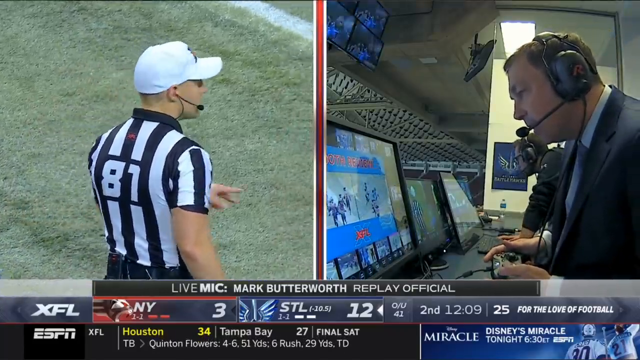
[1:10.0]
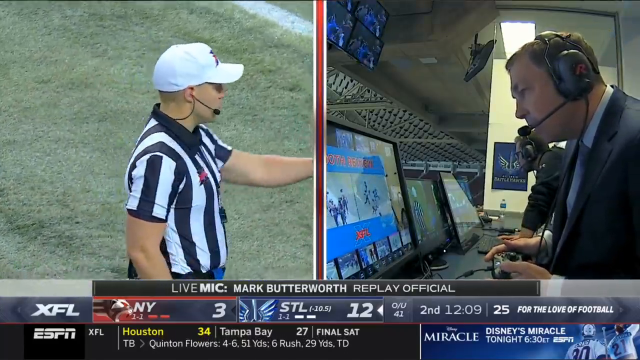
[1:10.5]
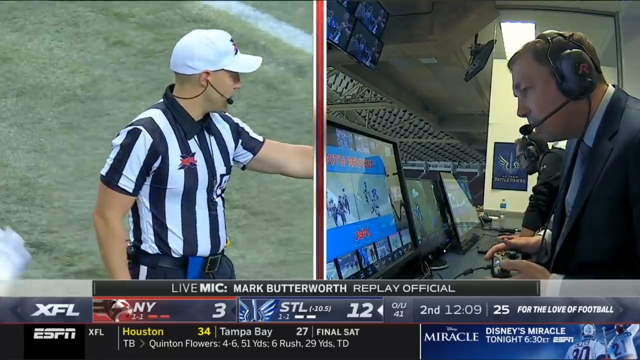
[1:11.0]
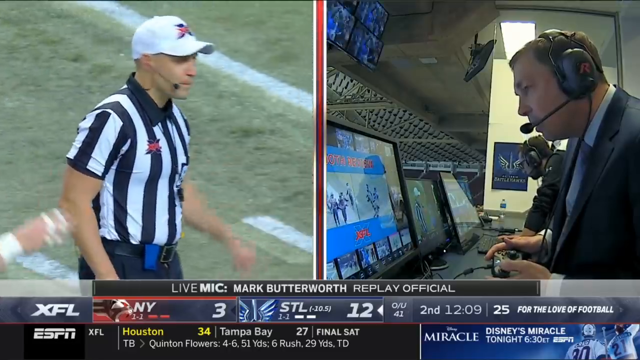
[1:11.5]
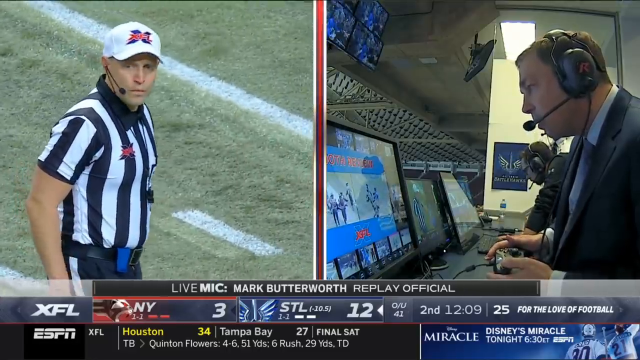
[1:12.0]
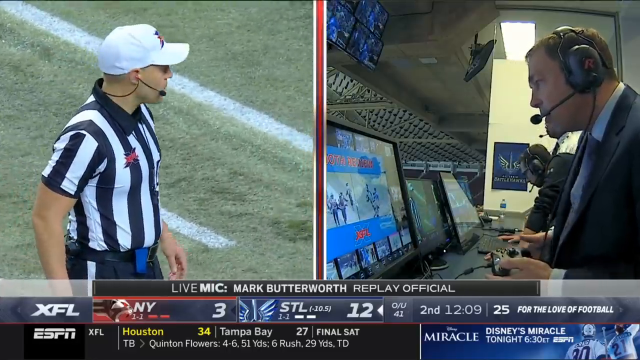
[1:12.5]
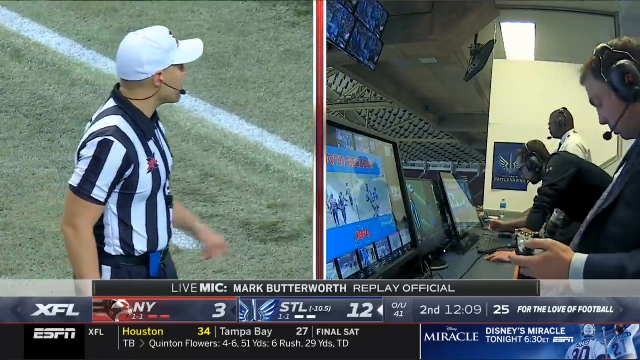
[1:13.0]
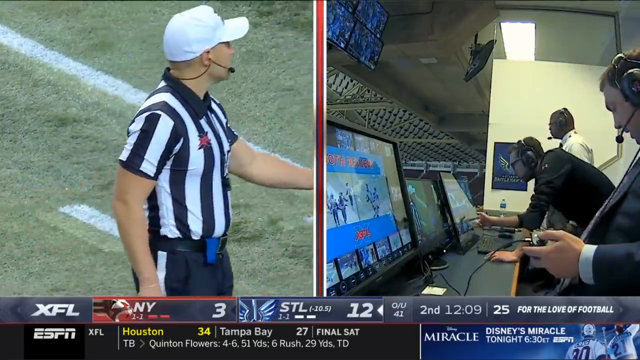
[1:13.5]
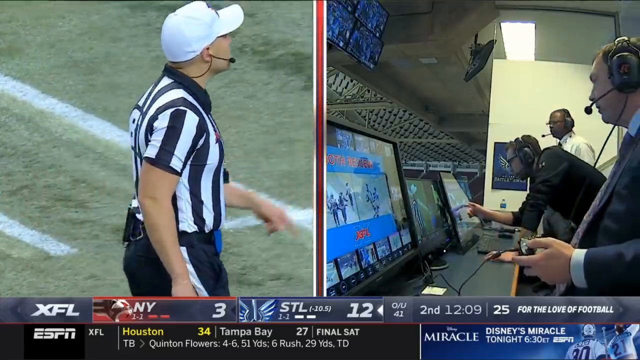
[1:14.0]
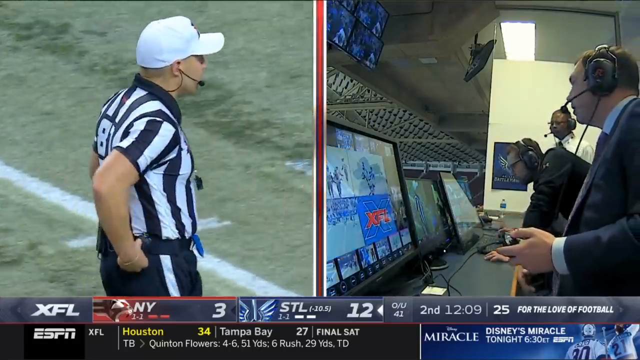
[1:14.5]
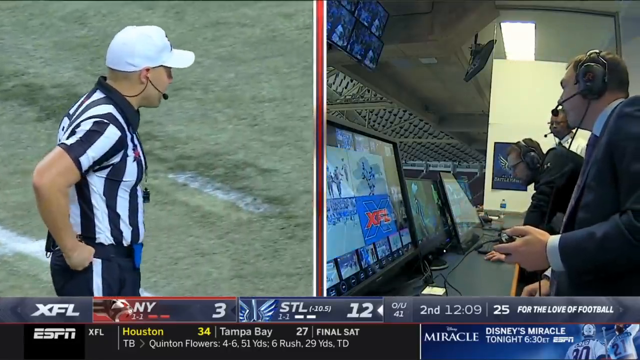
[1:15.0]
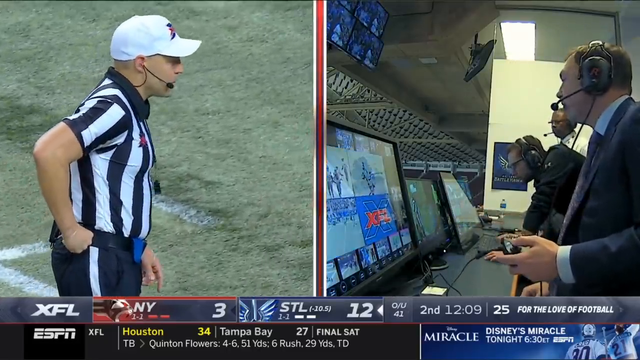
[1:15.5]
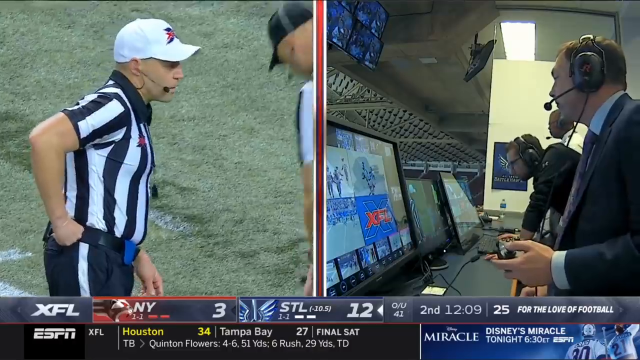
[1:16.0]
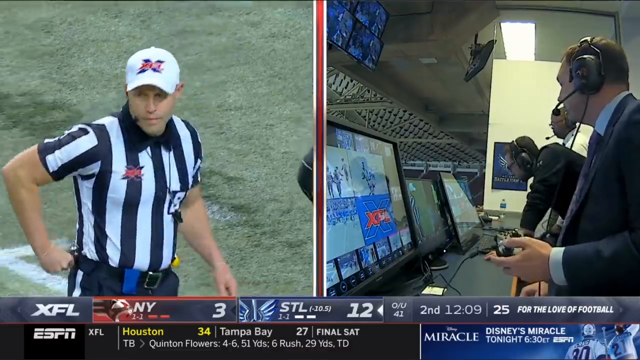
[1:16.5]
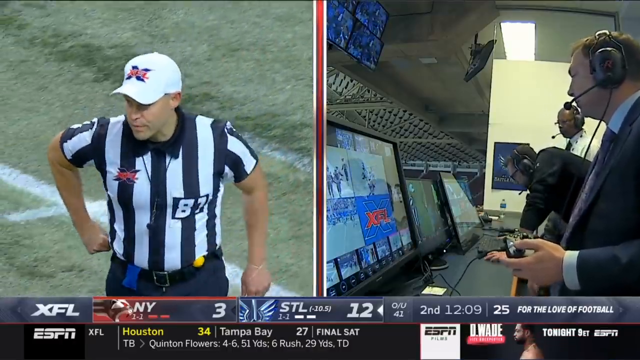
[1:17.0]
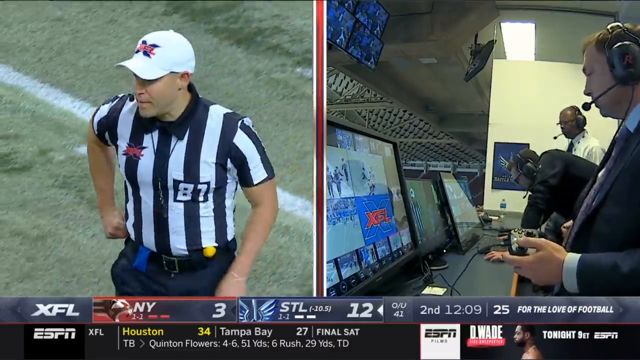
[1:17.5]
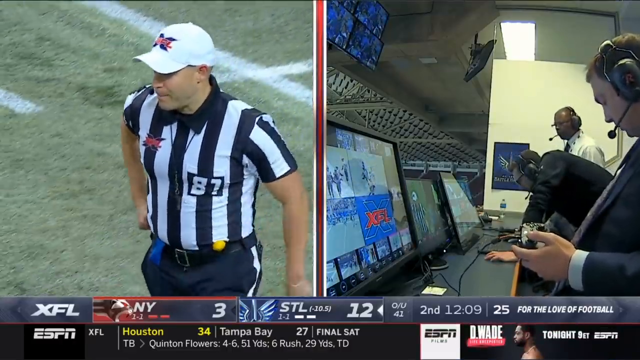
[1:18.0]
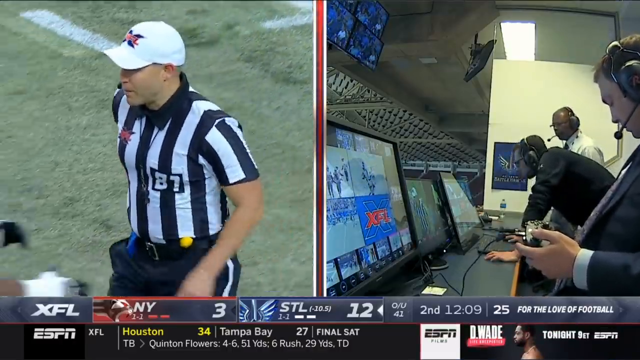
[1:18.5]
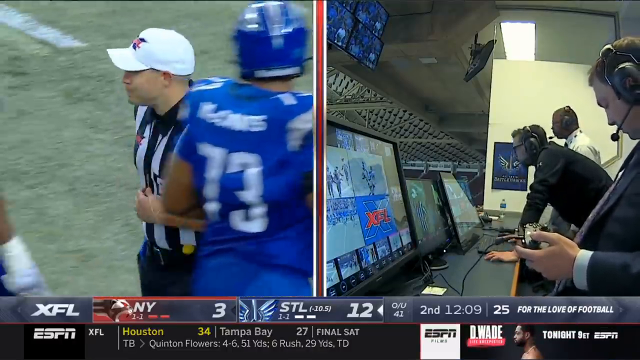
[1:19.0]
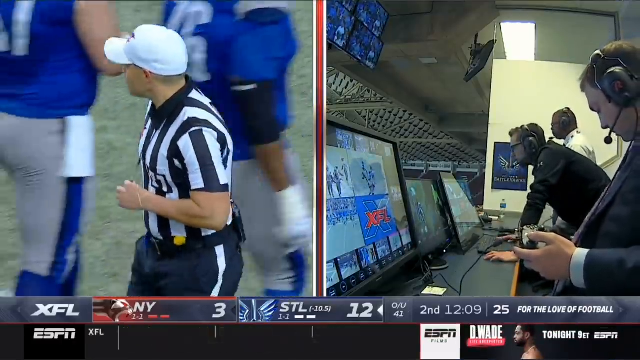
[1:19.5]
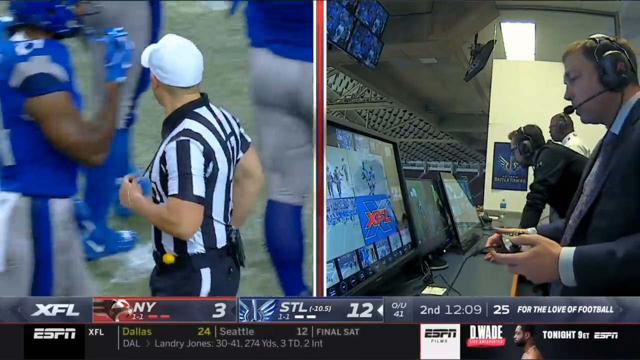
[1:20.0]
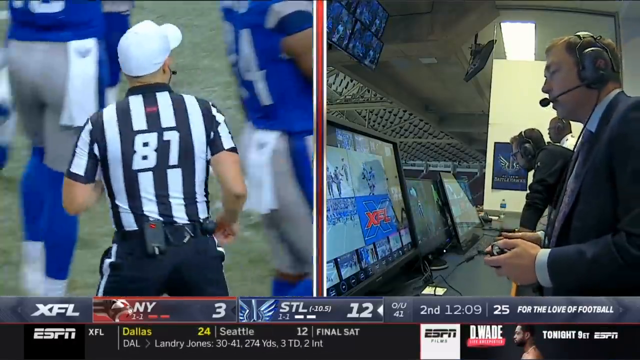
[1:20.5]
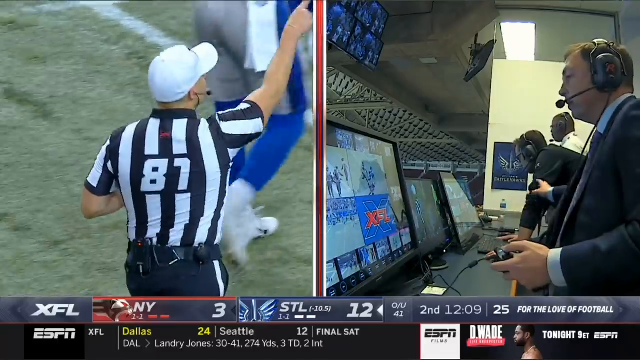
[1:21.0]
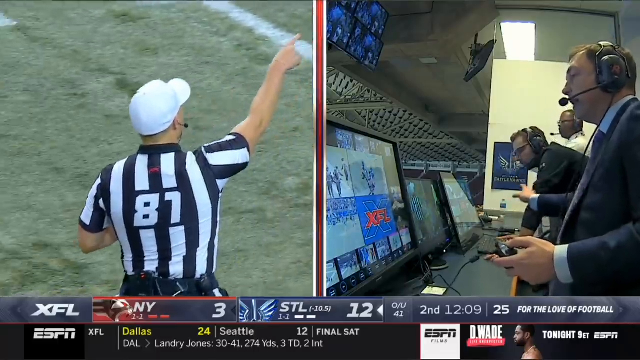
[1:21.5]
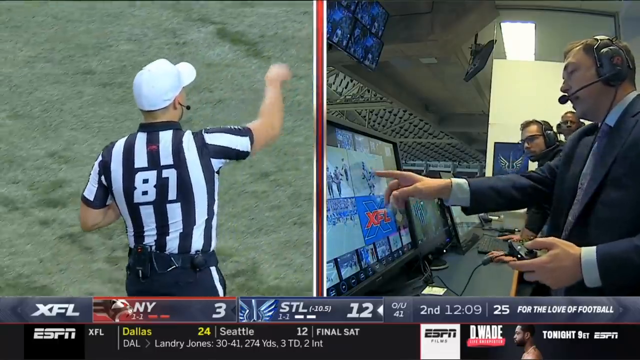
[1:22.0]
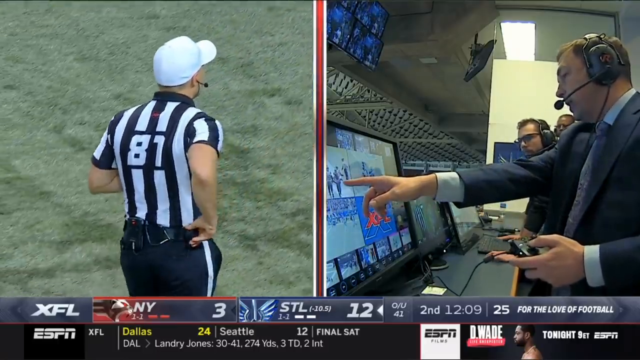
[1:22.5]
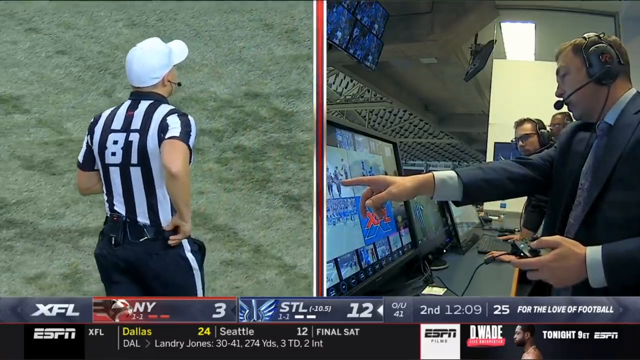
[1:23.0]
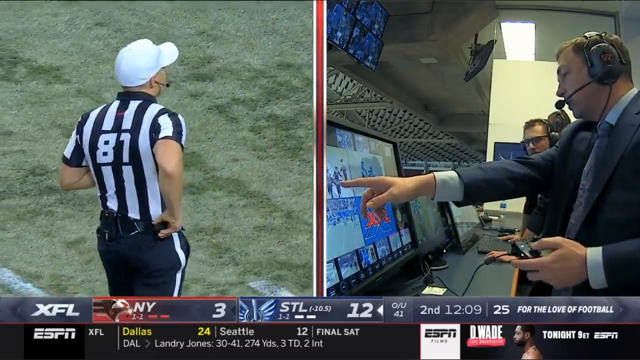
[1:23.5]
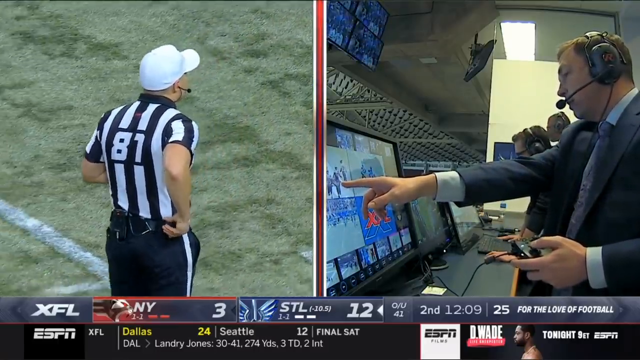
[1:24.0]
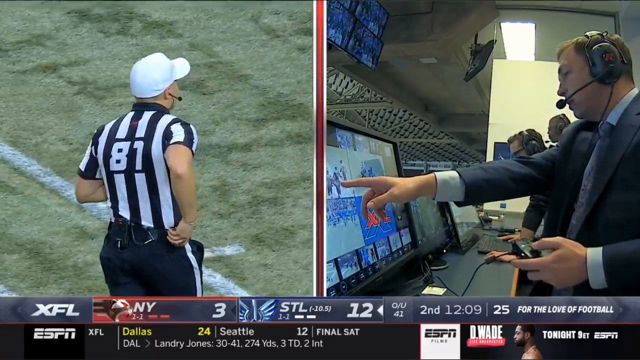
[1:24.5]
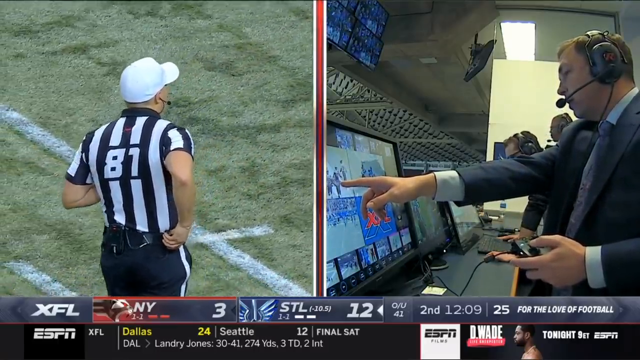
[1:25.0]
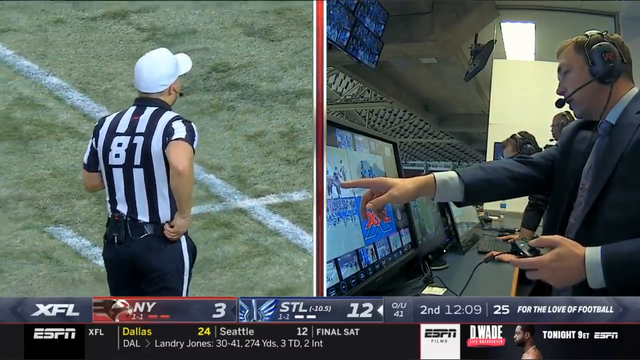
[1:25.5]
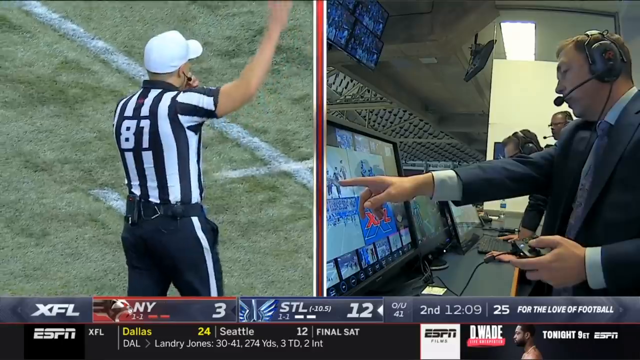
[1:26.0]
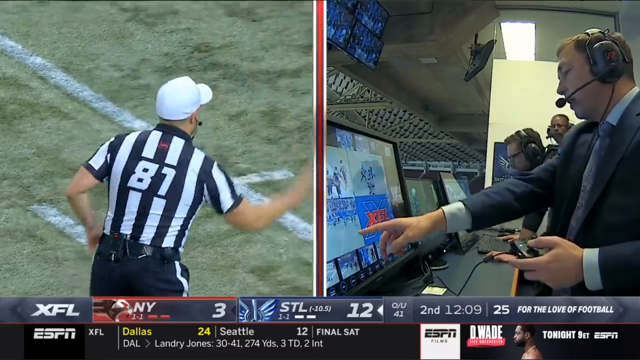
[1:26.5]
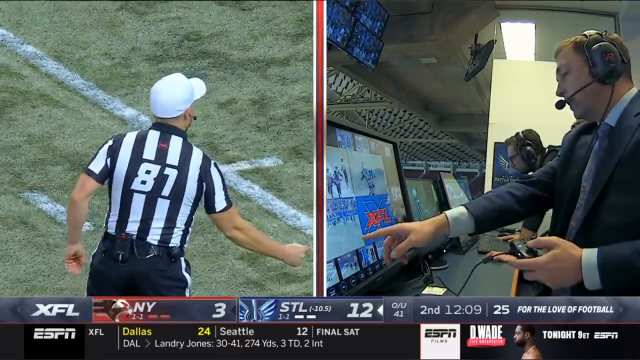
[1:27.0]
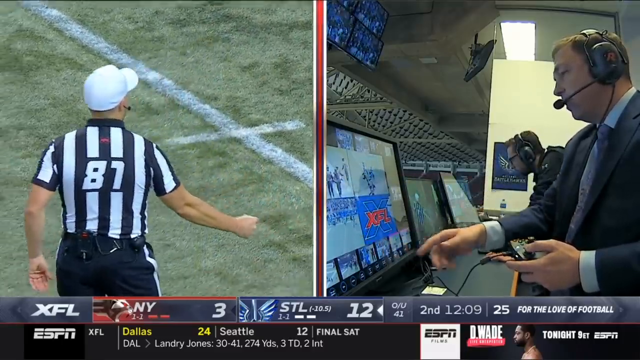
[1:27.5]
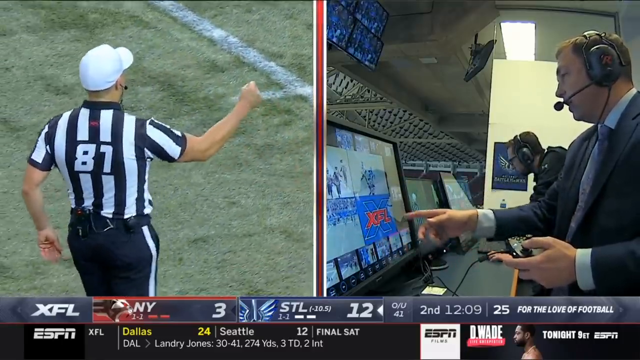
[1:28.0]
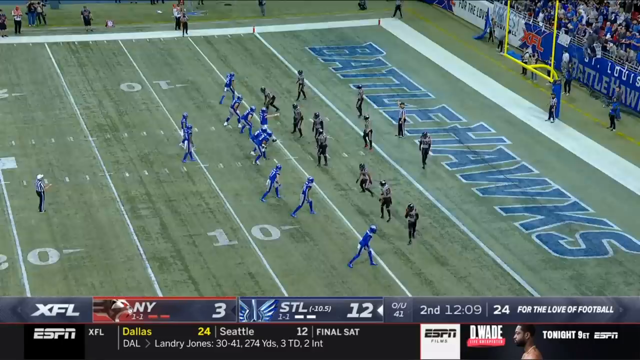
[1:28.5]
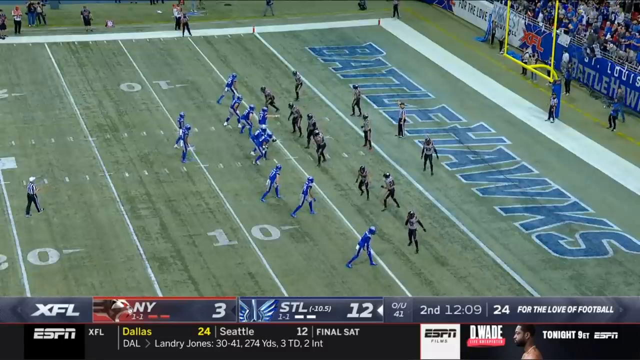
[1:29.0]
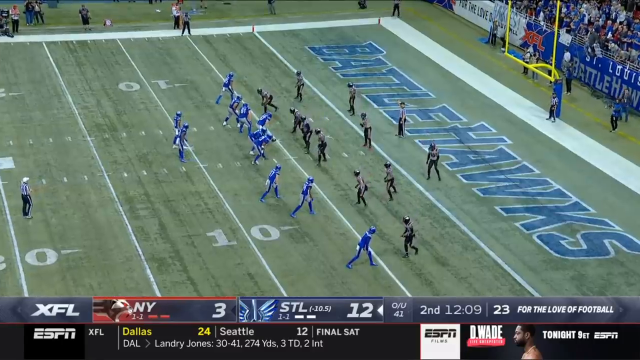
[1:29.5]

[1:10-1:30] In a football game, one team wears blue and white and the other wears black, white and red. The kickoff goes to the blue and white team, apparently called the Battle Hawks; a player throws the ball to another, who runs for a touchdown and scores. The team cheers, the fans cheer, and three people dressed as Hawks cheer in the stands. A sportscaster is shown up at the top of the field. A split screen then shows a referee in a black and white striped shirt with 81 on it; he walks and talks, backs up and throws his right arm down. The team goes for extra points and does not make it. A lady from ESPN interviews the player who scored, who wears a blue jersey with number 44. "XFL ESPN" appears on screen, and a replay plays in slow motion, ending the video.